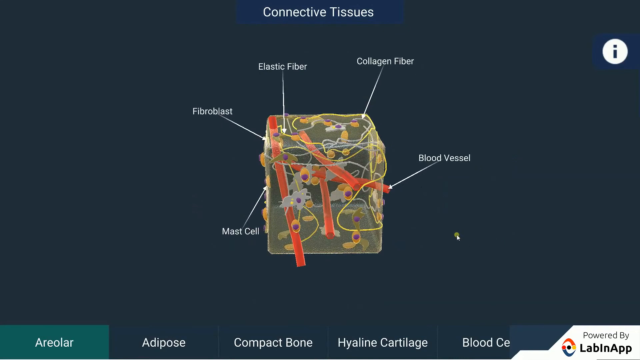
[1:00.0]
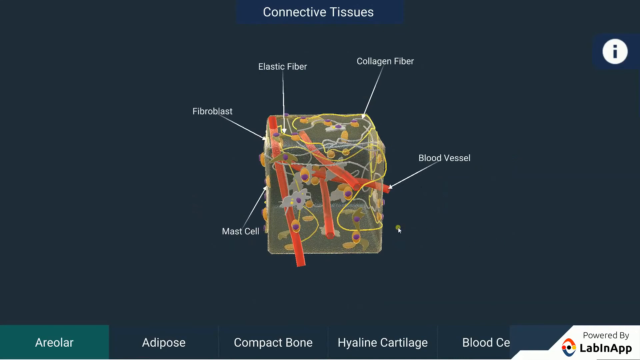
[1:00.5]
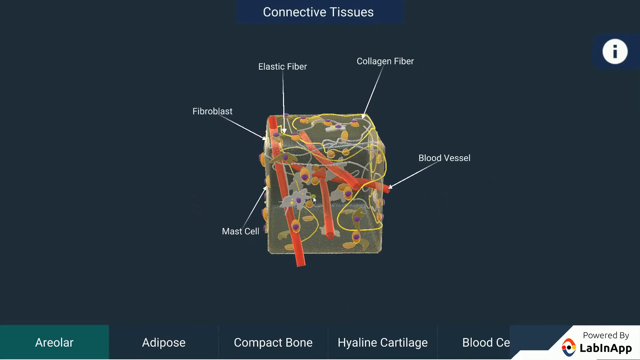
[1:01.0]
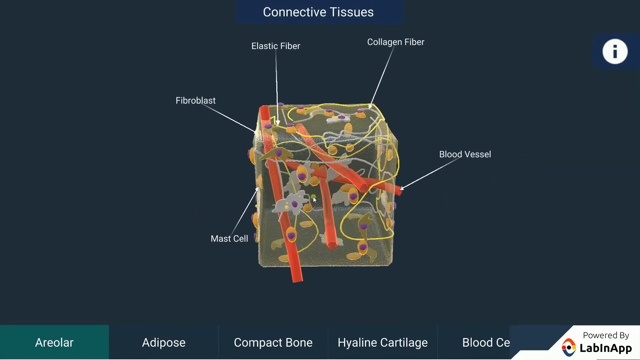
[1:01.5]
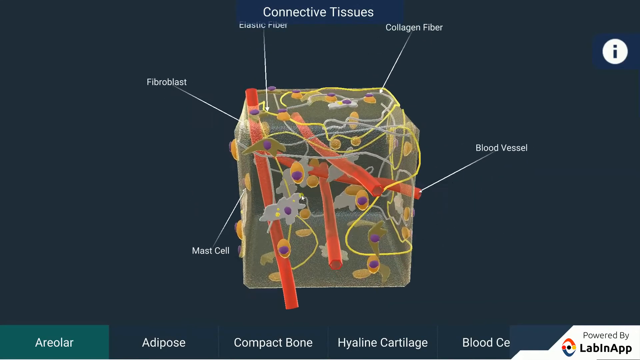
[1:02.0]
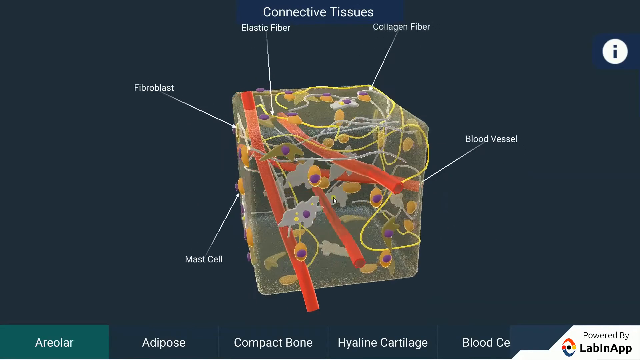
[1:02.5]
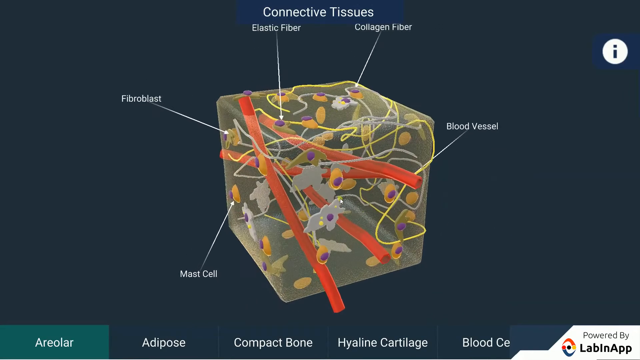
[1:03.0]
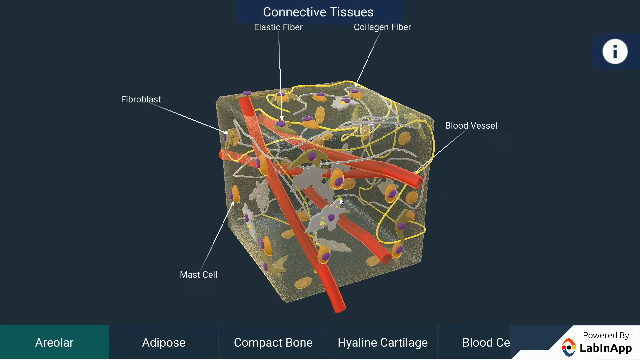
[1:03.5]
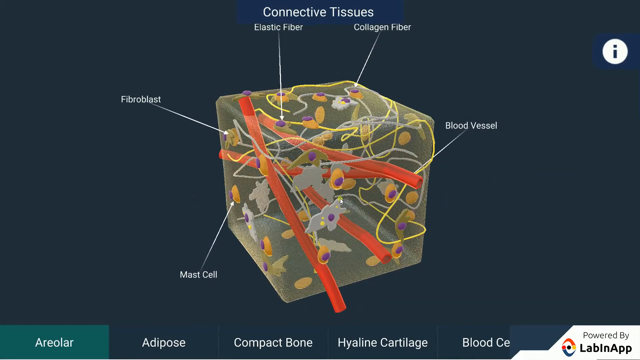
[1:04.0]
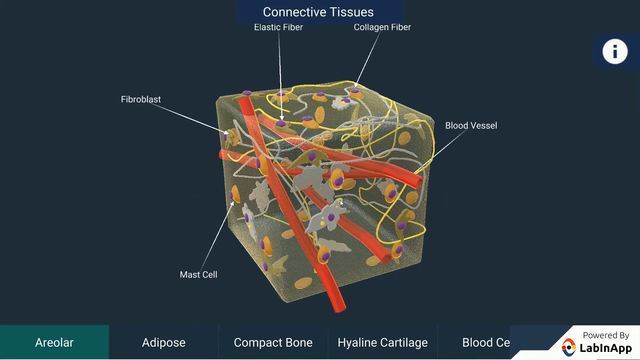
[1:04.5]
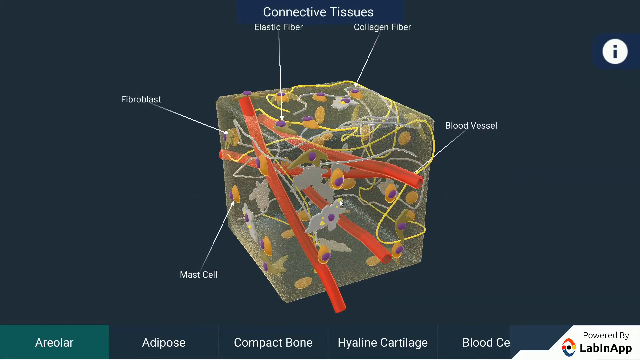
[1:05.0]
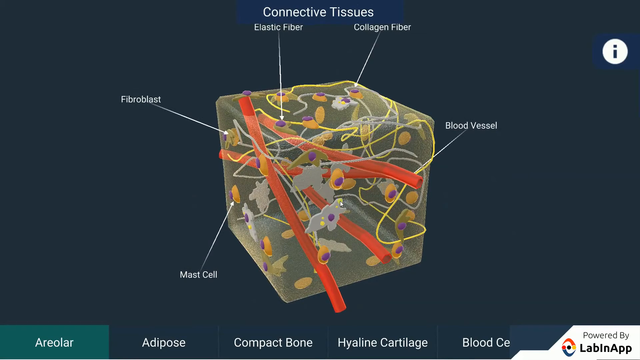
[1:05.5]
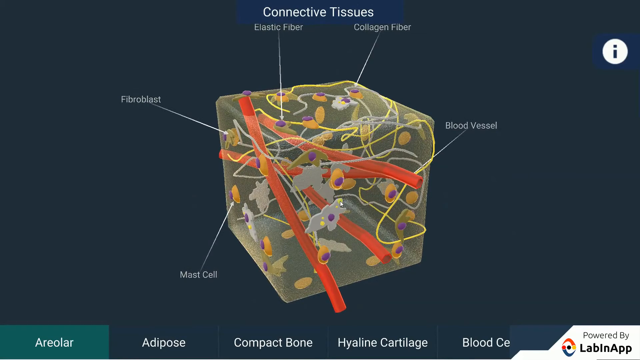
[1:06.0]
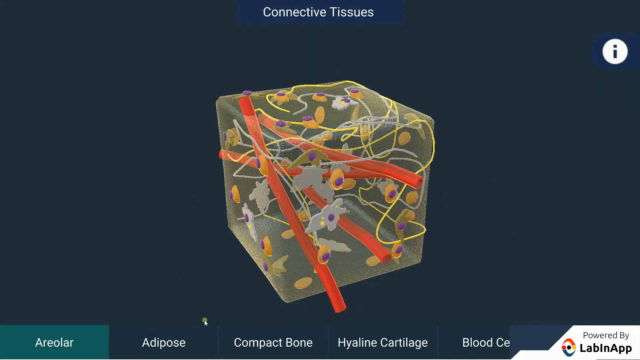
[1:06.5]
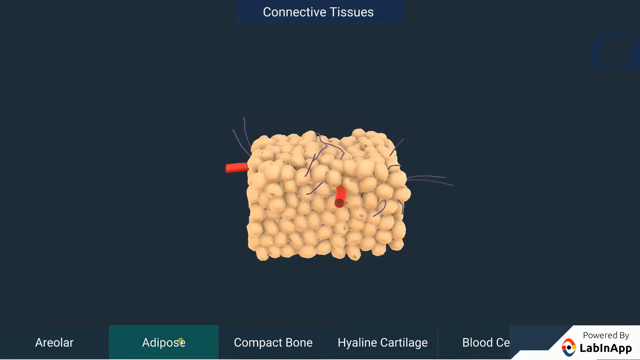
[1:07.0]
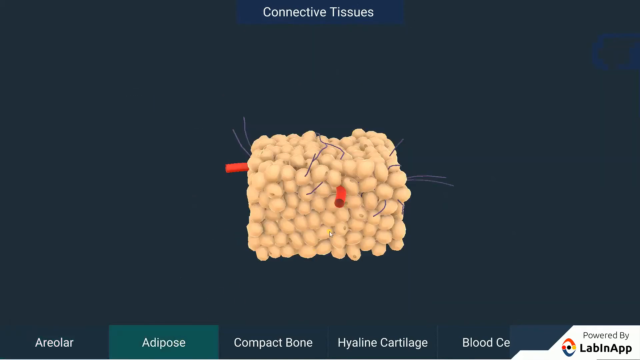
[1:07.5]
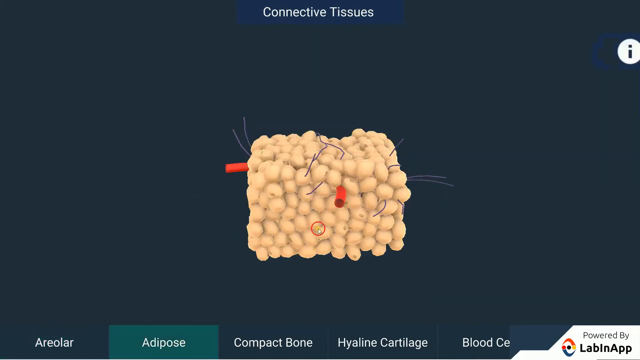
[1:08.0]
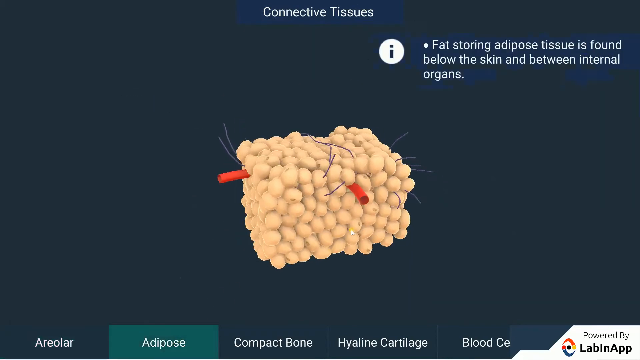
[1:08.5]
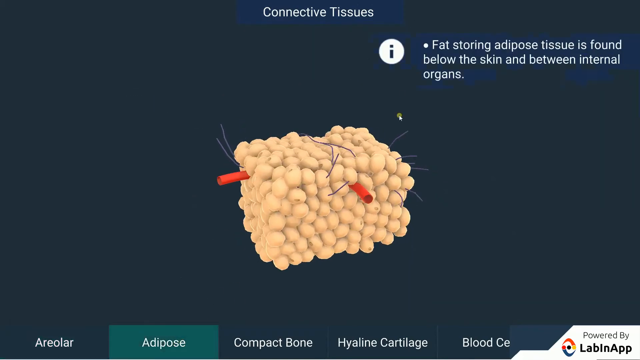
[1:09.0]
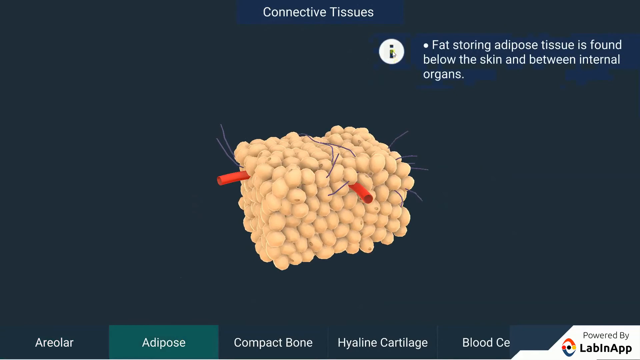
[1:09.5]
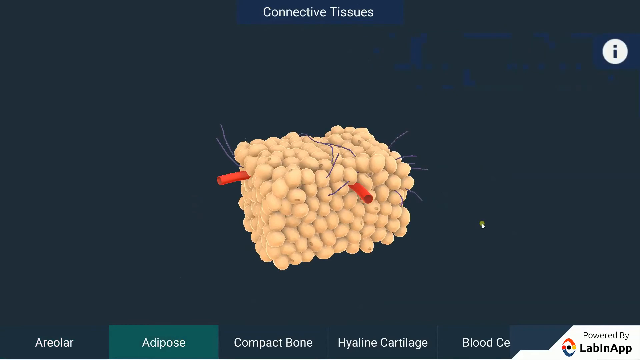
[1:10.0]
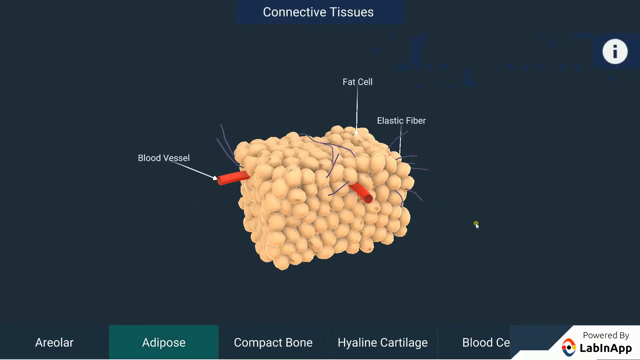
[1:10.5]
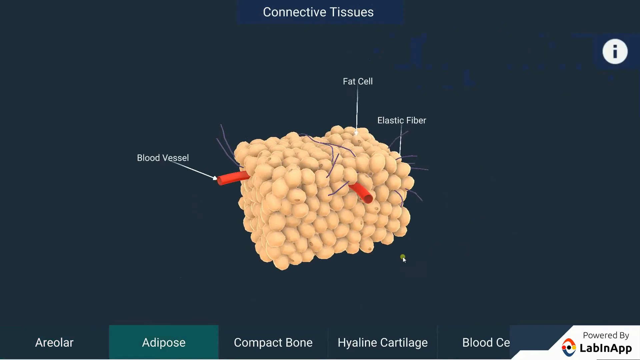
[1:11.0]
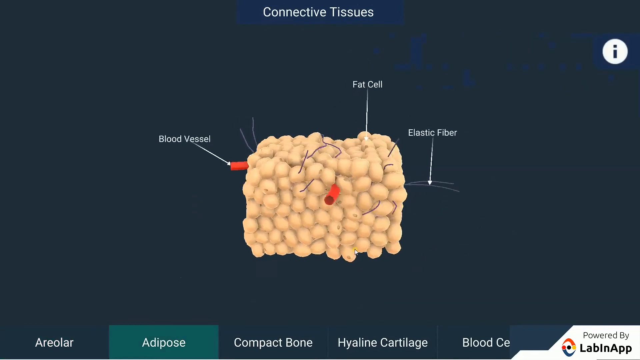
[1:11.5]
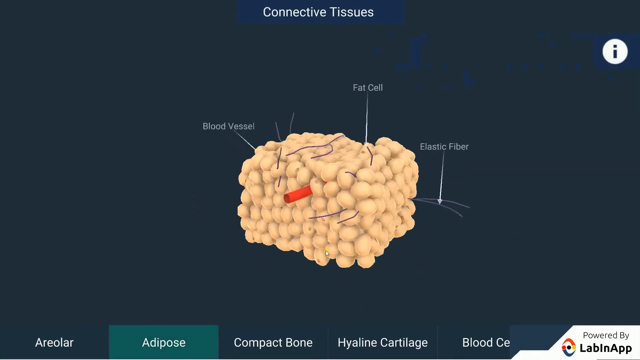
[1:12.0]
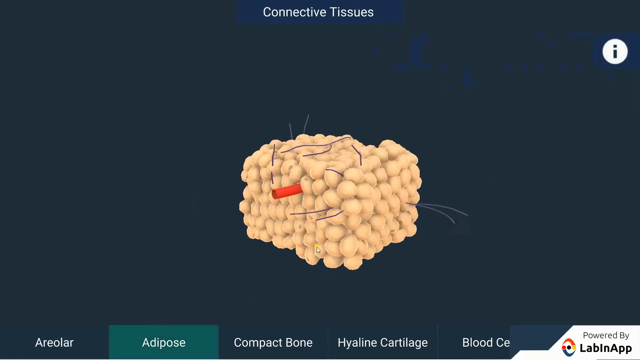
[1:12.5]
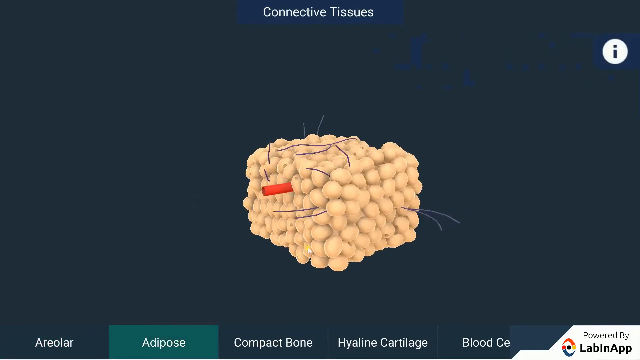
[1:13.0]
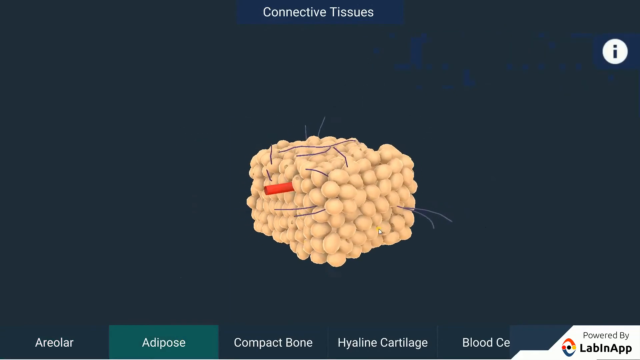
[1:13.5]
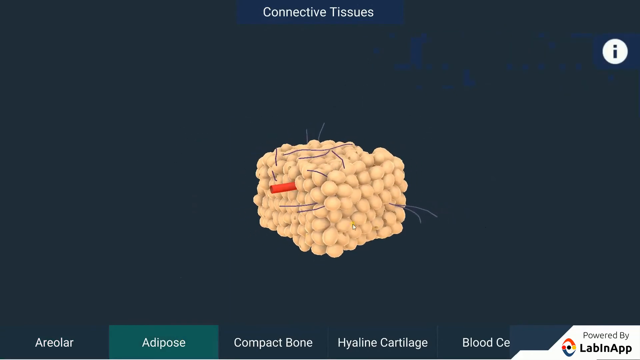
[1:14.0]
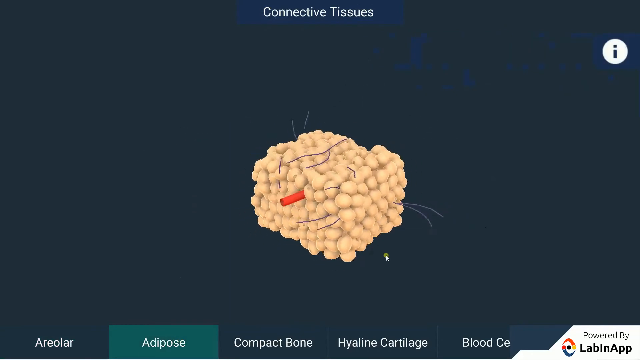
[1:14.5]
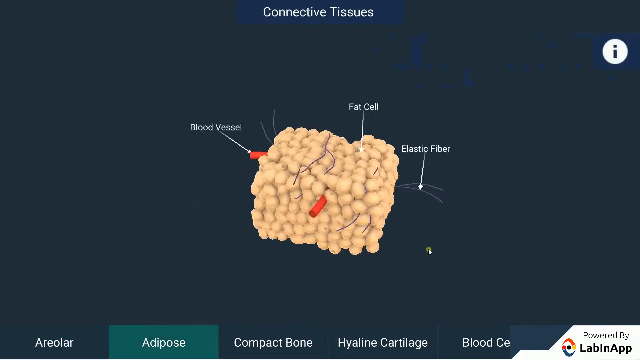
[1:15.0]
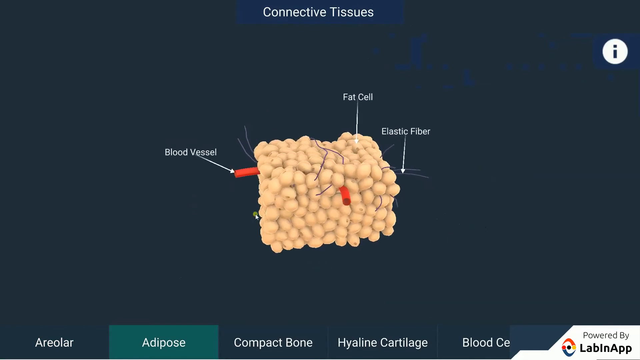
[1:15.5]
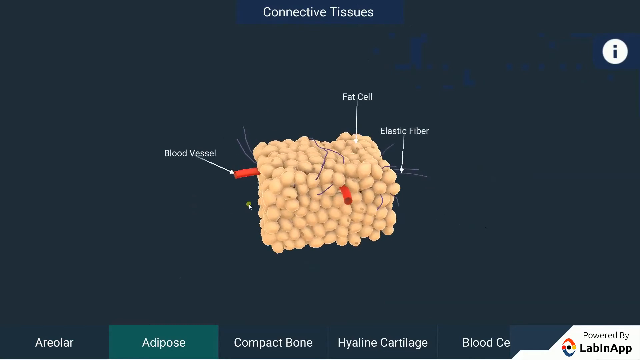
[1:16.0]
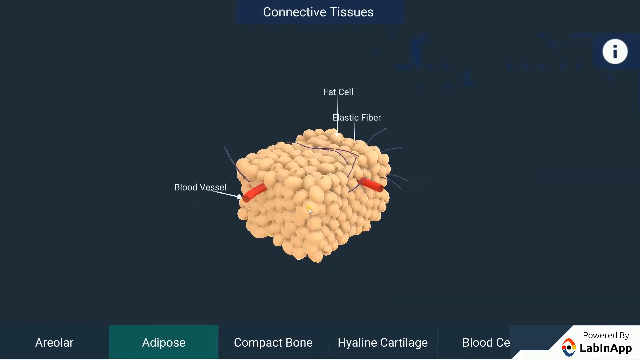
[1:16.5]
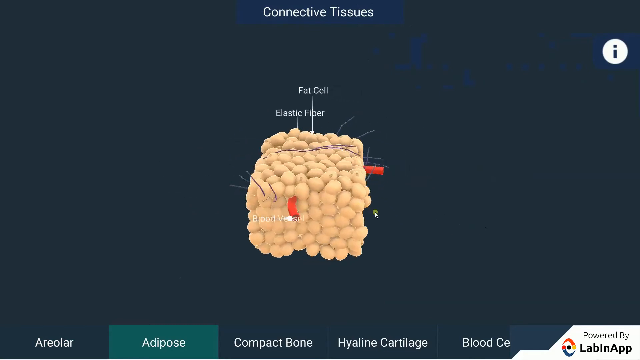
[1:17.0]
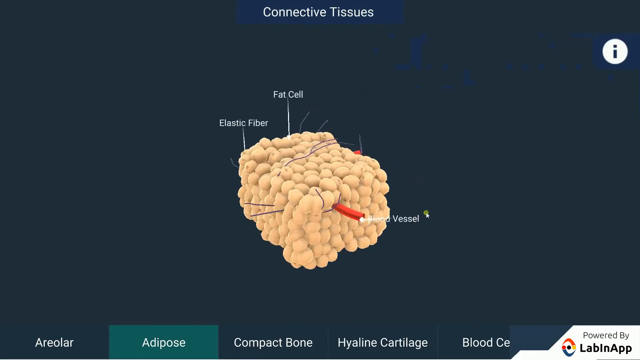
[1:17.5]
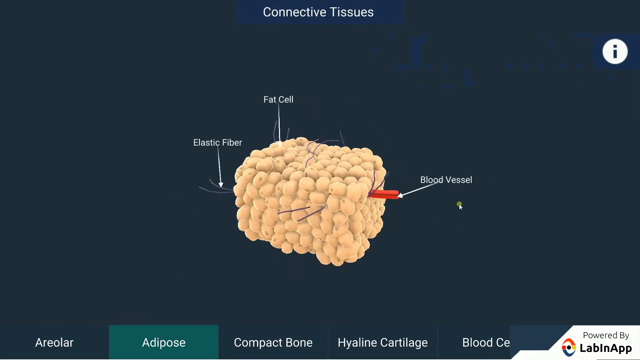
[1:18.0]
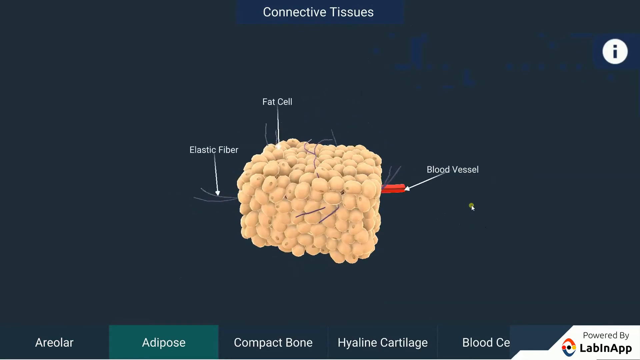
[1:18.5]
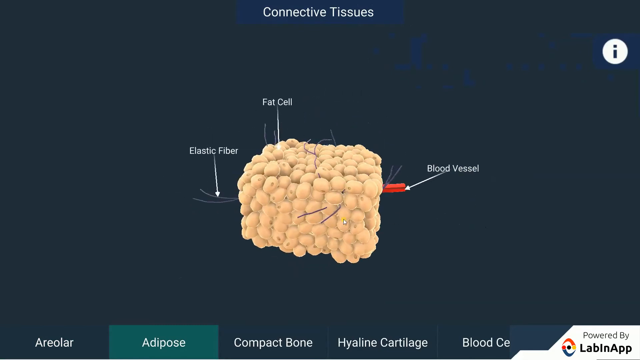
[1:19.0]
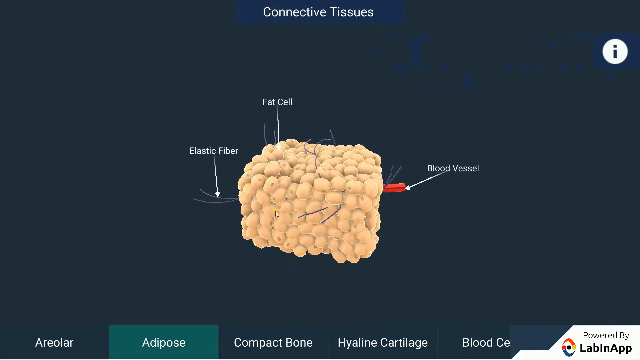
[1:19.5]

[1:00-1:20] The presentation of the organelles of the 3D-modeled connective tissue continues for a few seconds. The user then changes page by choosing "Adipose" in the menu below. A 3D model of another organ appears, possibly also connective tissue, with a slightly different appearance: it is also a cube, but rectangular this time. Its body resembles a brain but is skin-colored, very wrinkled, with many balls joined together. Several veins seem to come out of it, with blood vessels in different places. Labels appear naming the components of this tissue, such as blood vessels, the fat cell and the elastic fiber, suggesting the model apparently represents a fat cell with elastic fibers and capillaries.